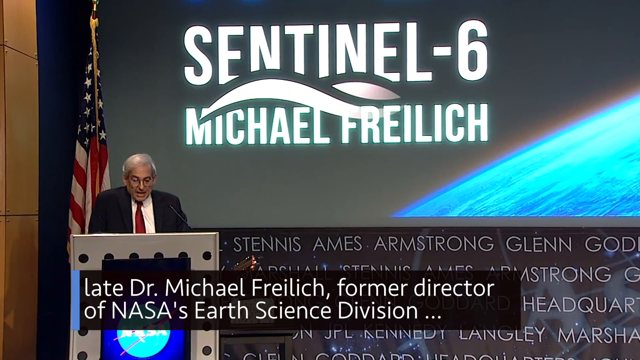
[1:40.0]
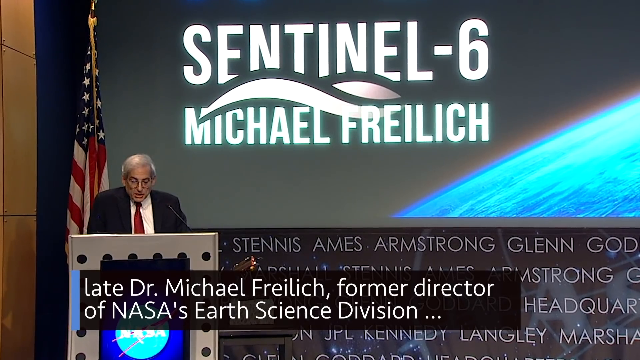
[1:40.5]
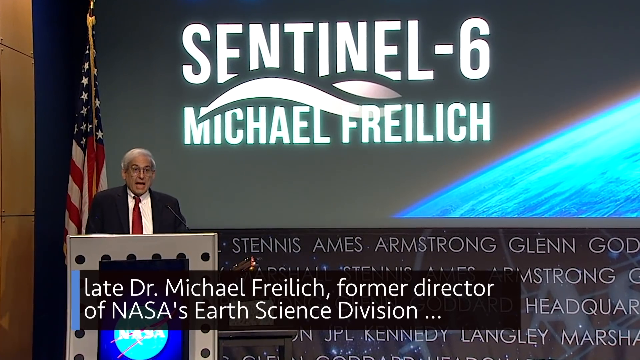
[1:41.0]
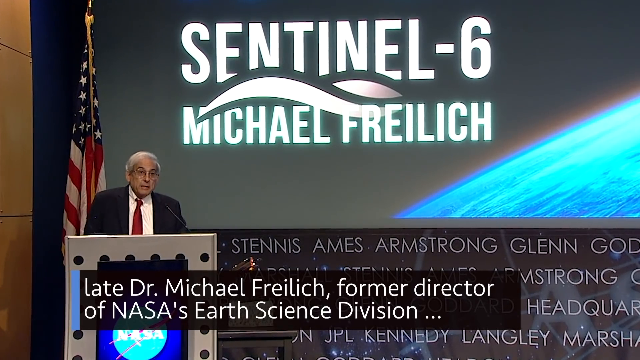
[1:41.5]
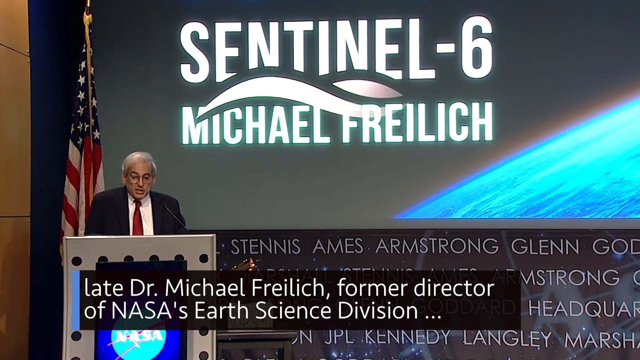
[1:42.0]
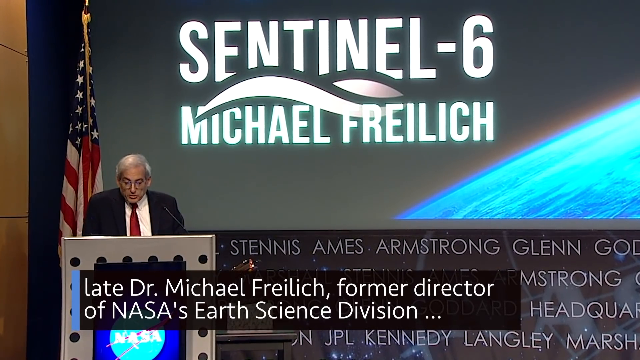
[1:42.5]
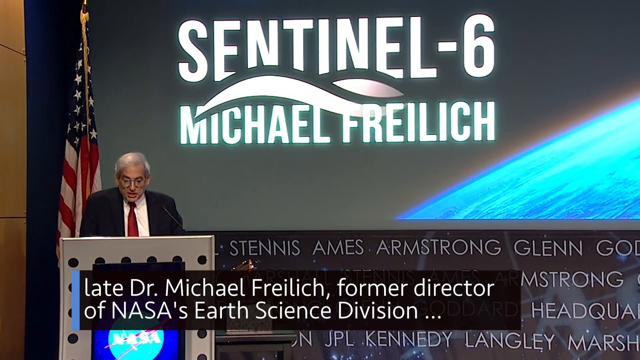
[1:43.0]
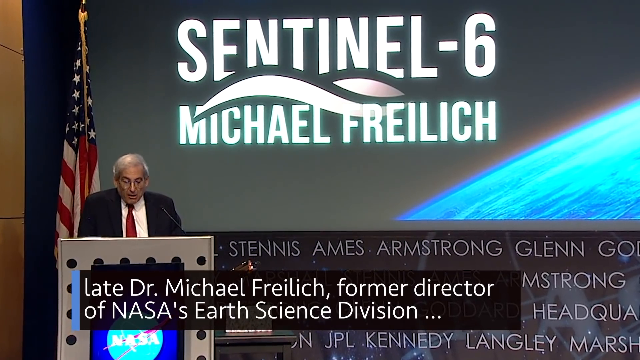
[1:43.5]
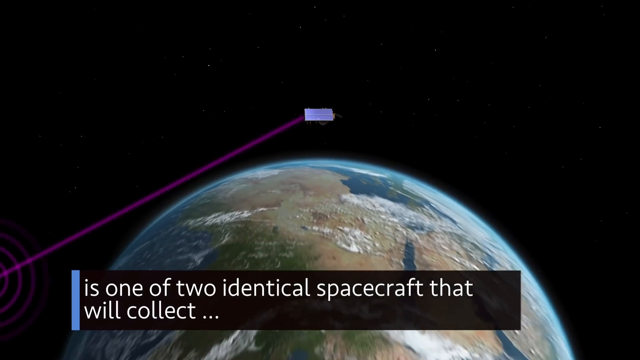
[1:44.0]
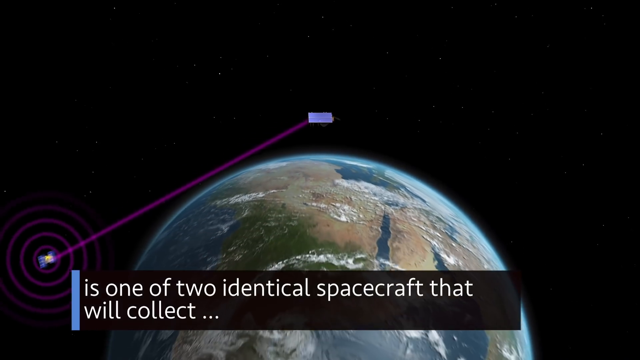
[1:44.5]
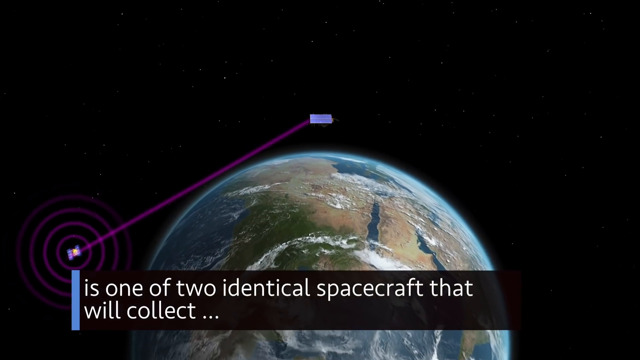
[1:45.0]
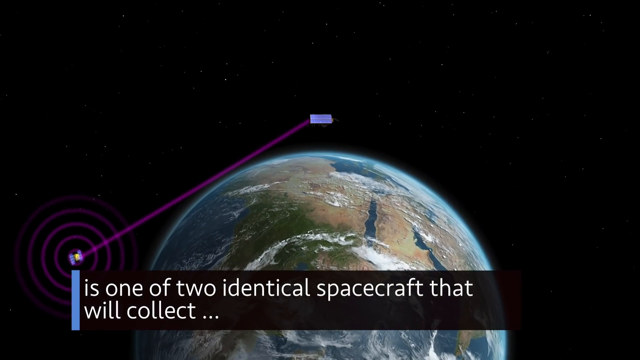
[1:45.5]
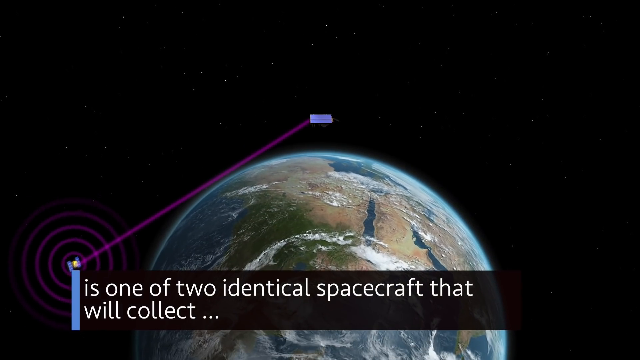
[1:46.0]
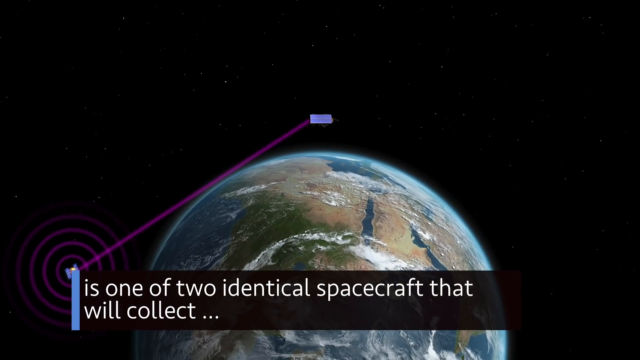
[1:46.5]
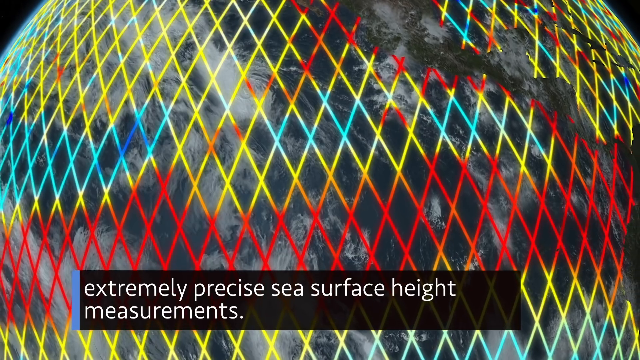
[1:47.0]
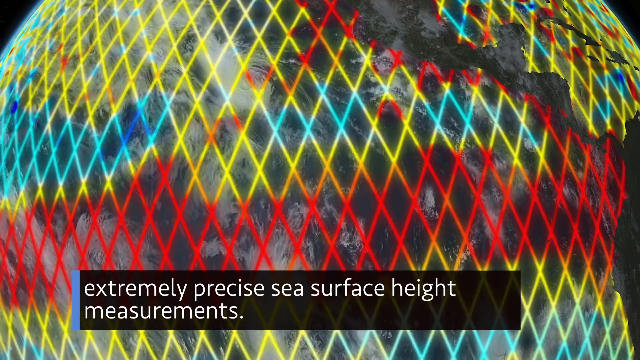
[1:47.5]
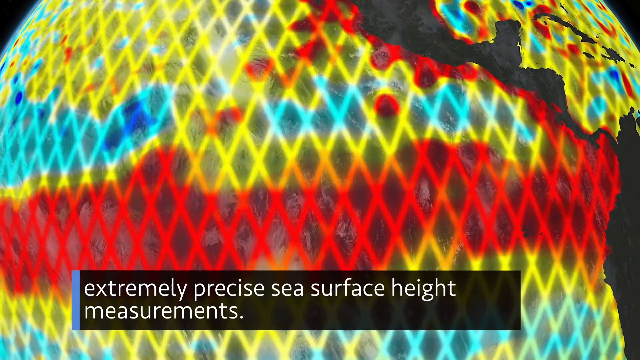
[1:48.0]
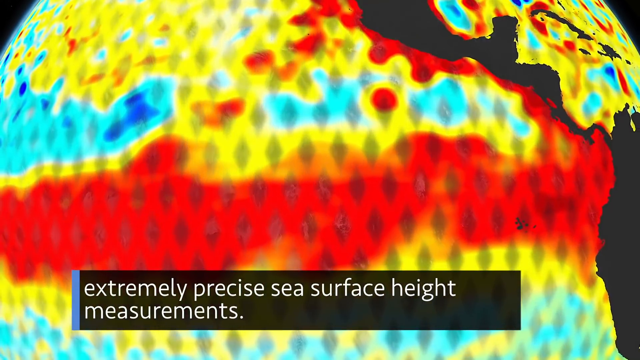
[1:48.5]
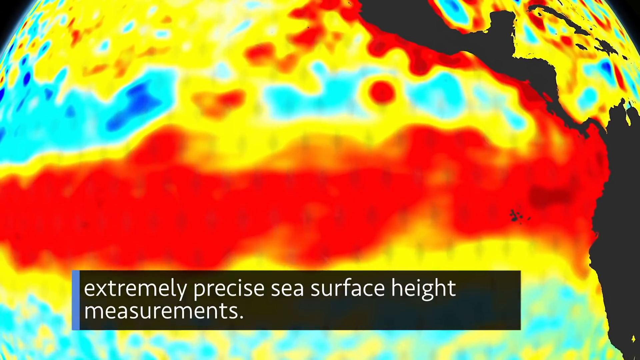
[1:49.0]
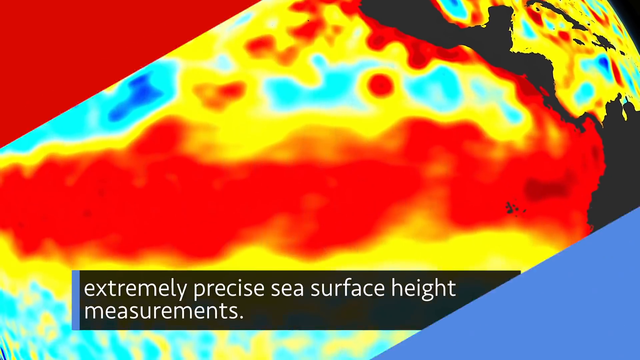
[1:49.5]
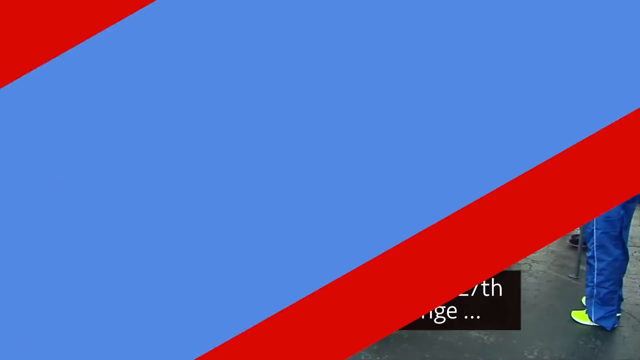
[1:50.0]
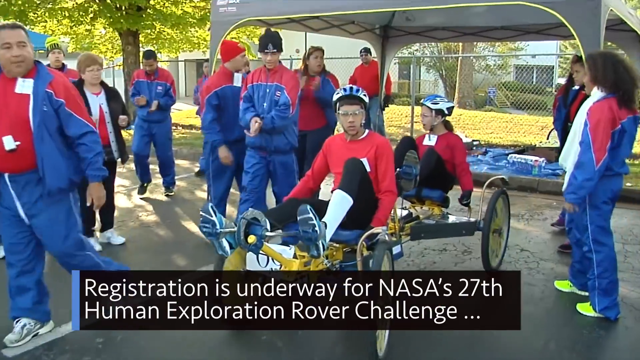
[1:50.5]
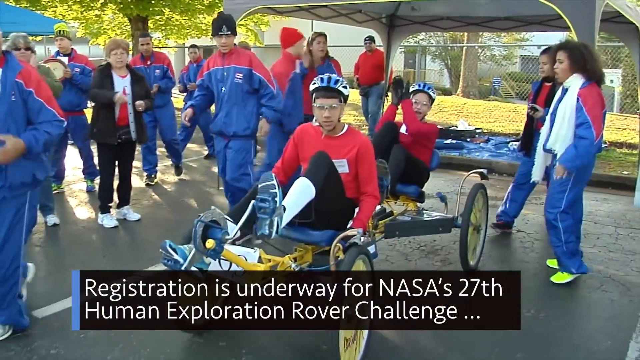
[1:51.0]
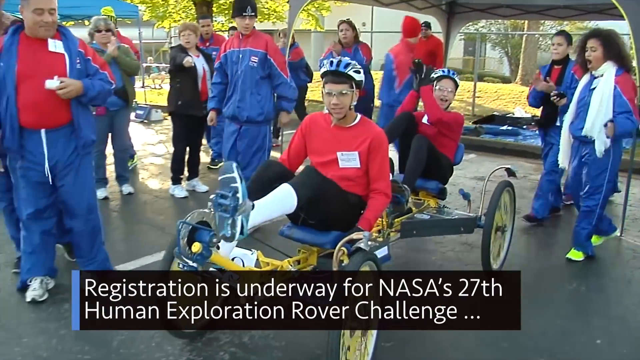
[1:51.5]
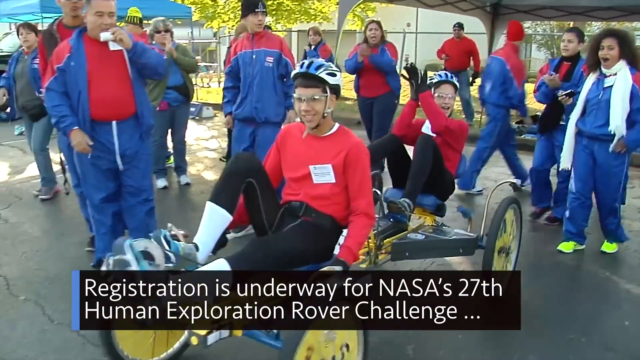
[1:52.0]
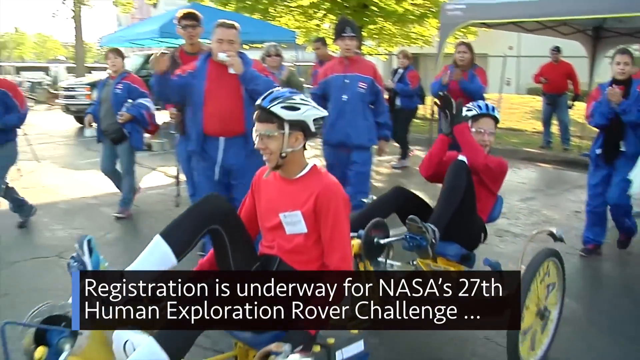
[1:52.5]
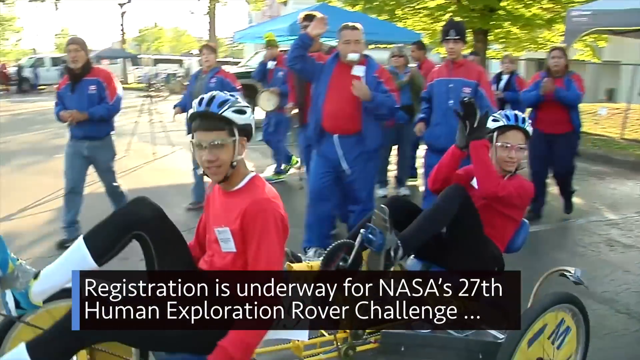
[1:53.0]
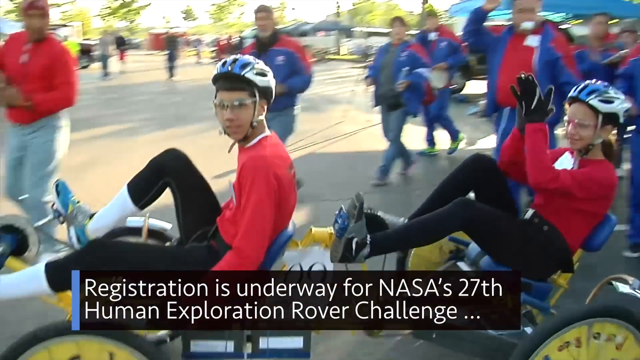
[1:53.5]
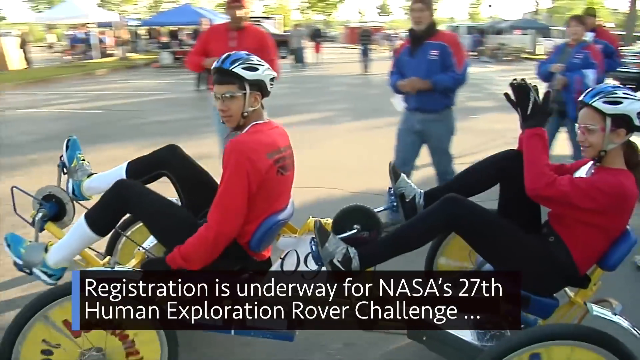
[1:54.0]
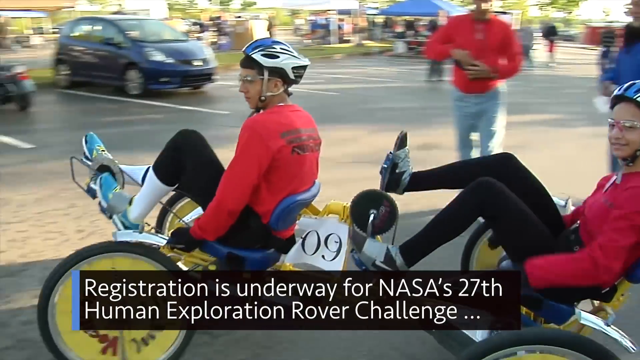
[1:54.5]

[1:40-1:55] A person named Michael Friedlich speaks behind a podium on a stage. The captions seem to indicate that two identical spaceships will be launched to collect the specimens needed from the asteroid. A large photo of the Earth looks like it has radiation colors, red, blue and yellow, more like infrared. Then two people appear on a bicycle, with a caption saying registration is beginning for the rover challenge.